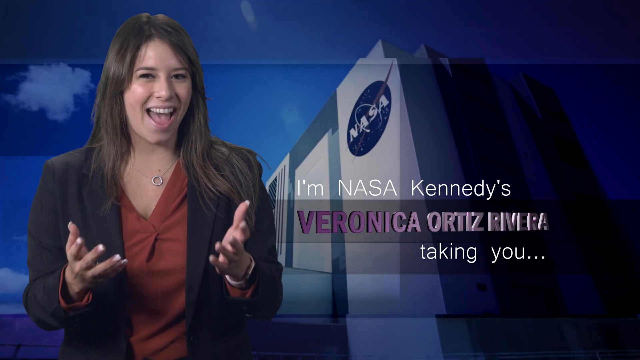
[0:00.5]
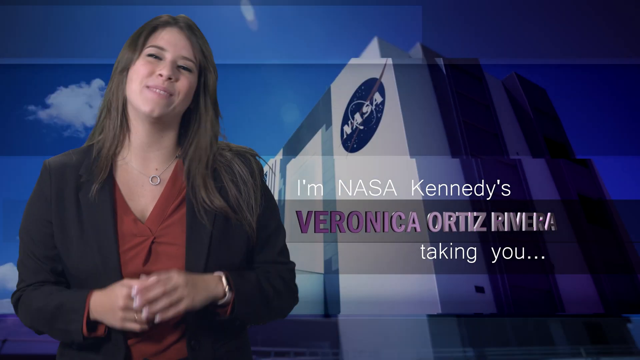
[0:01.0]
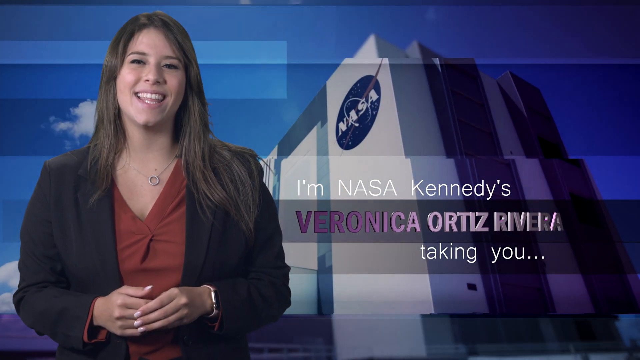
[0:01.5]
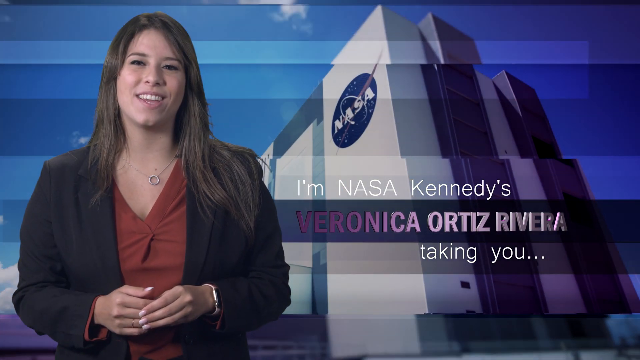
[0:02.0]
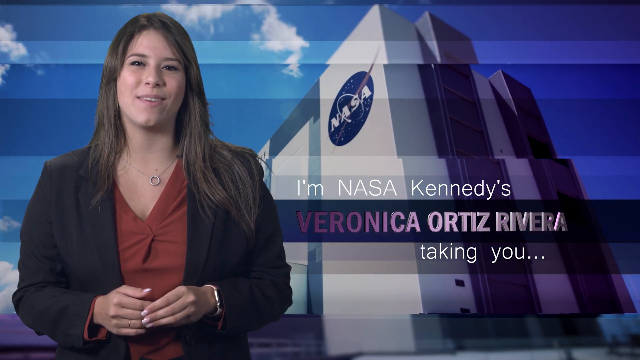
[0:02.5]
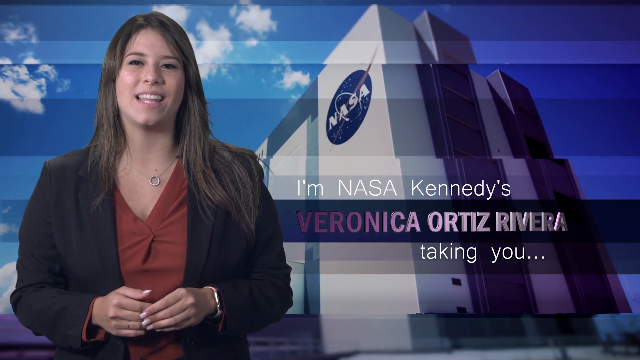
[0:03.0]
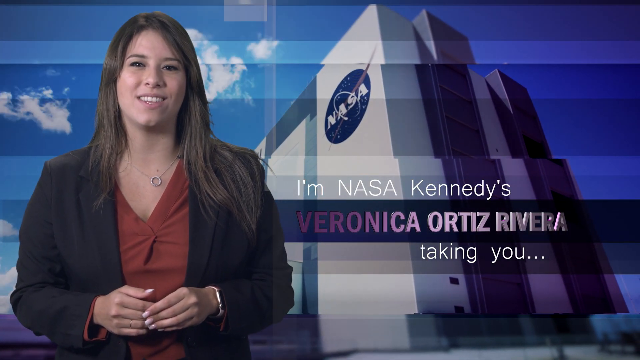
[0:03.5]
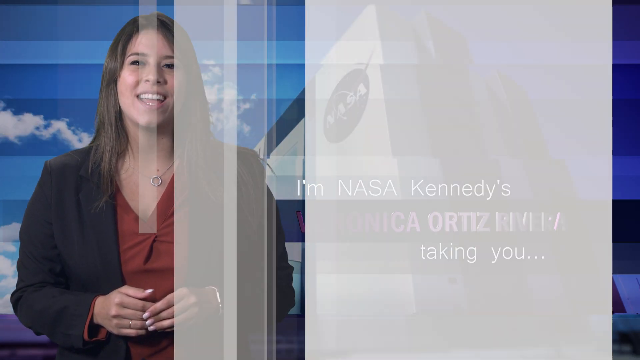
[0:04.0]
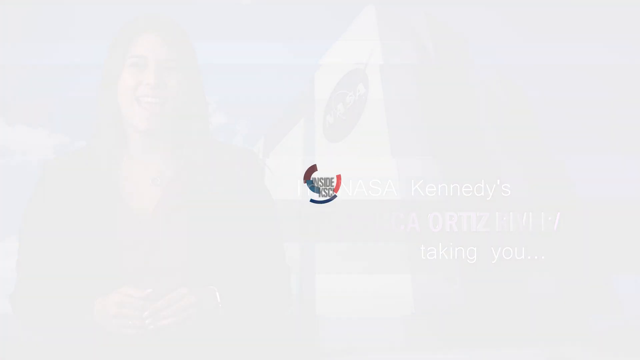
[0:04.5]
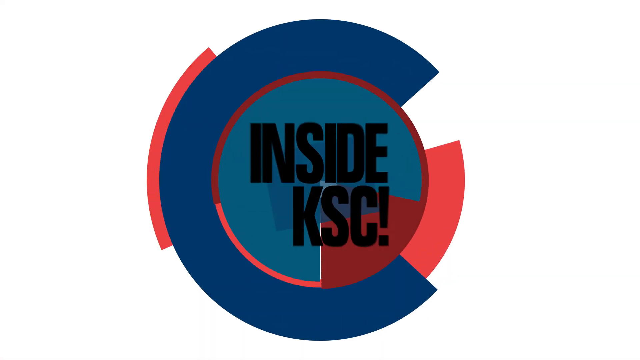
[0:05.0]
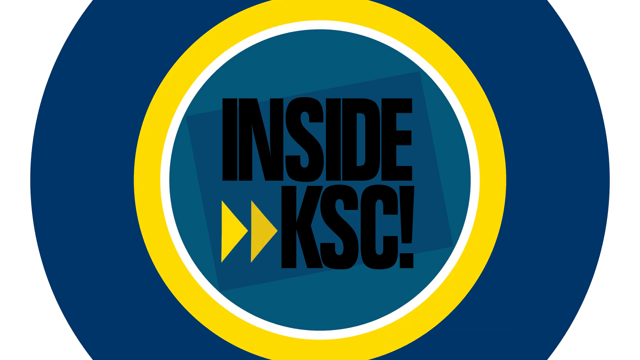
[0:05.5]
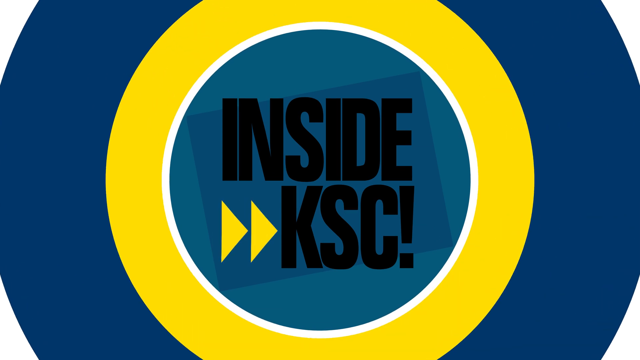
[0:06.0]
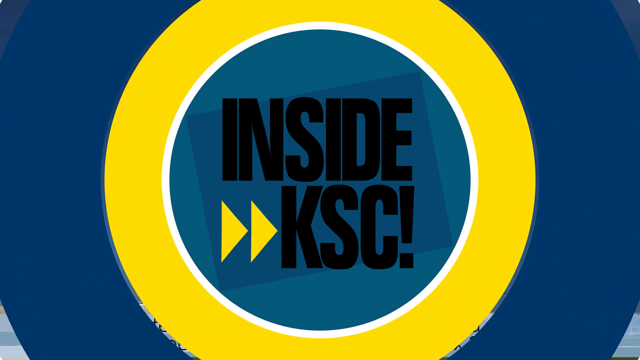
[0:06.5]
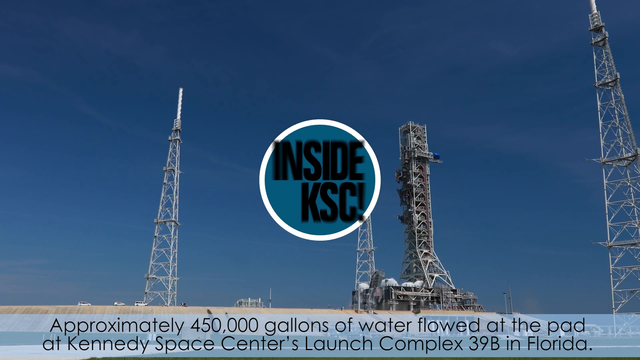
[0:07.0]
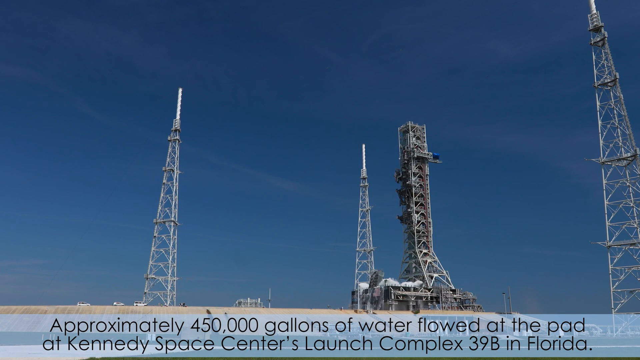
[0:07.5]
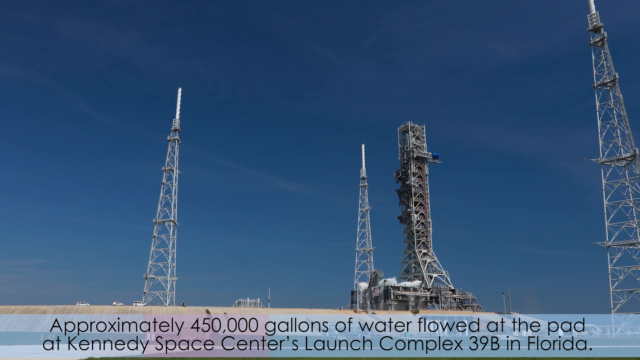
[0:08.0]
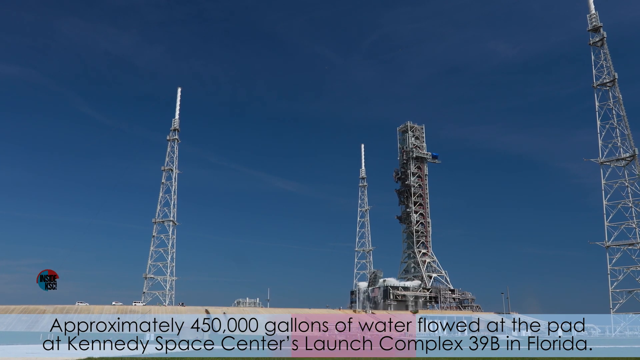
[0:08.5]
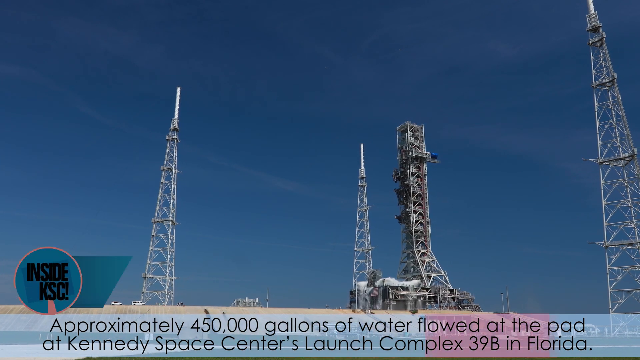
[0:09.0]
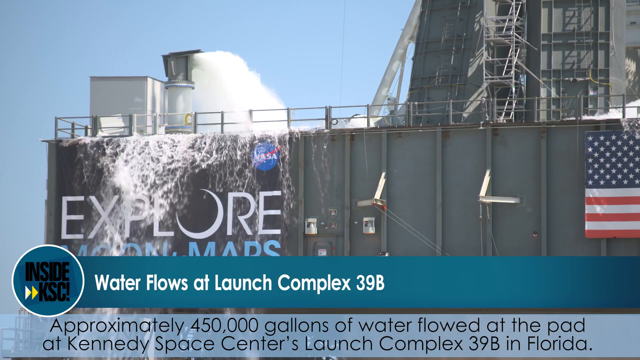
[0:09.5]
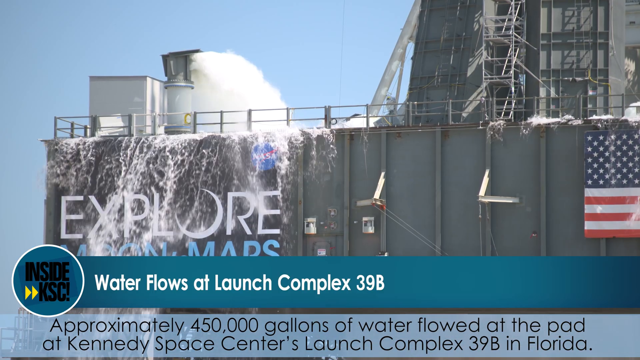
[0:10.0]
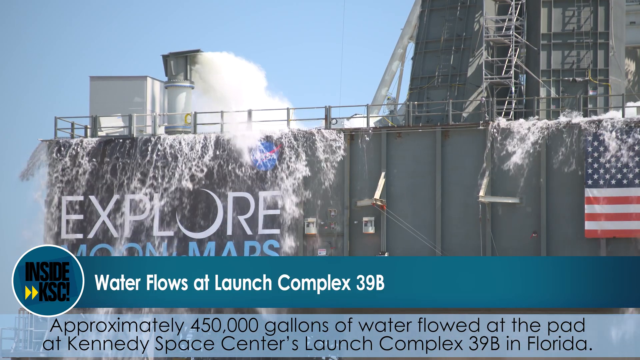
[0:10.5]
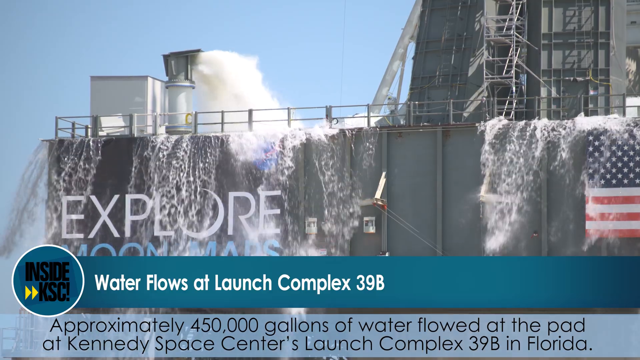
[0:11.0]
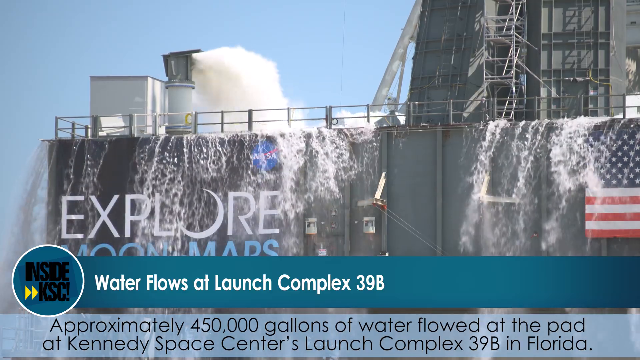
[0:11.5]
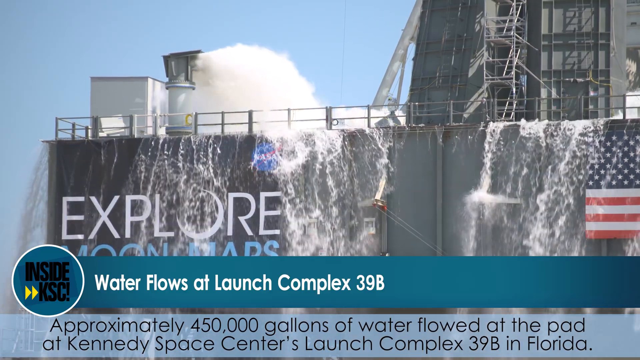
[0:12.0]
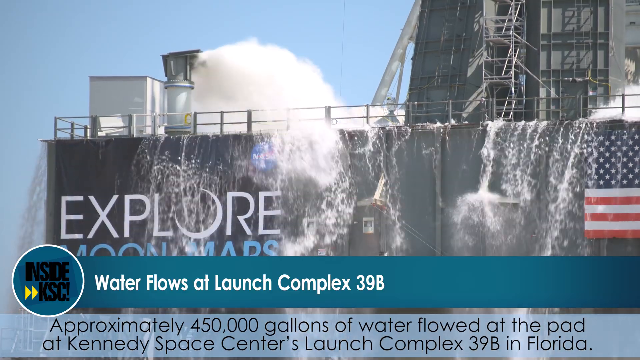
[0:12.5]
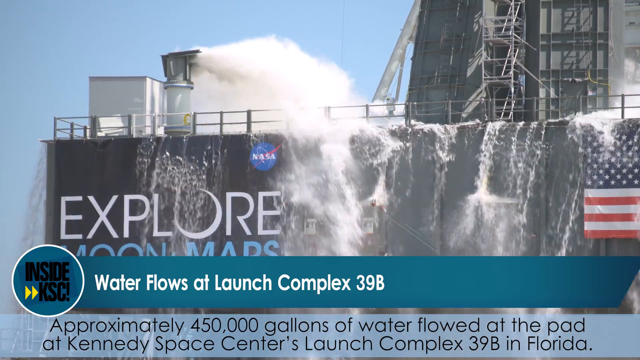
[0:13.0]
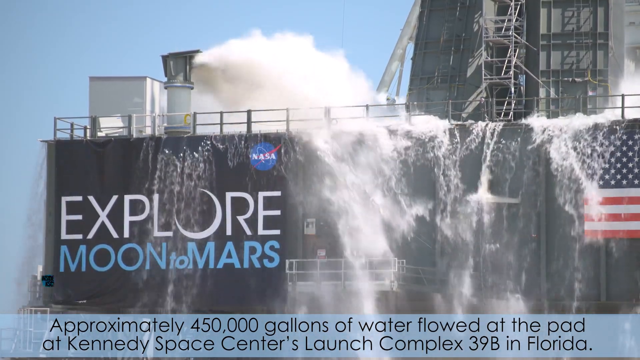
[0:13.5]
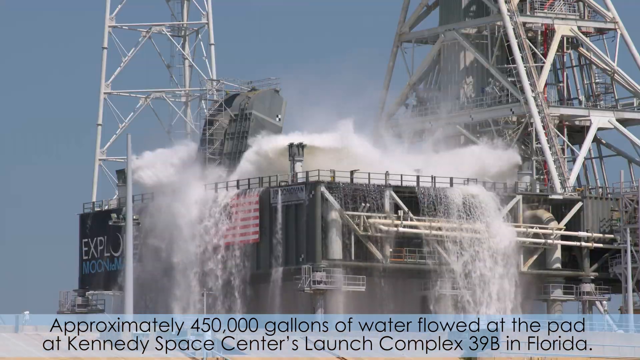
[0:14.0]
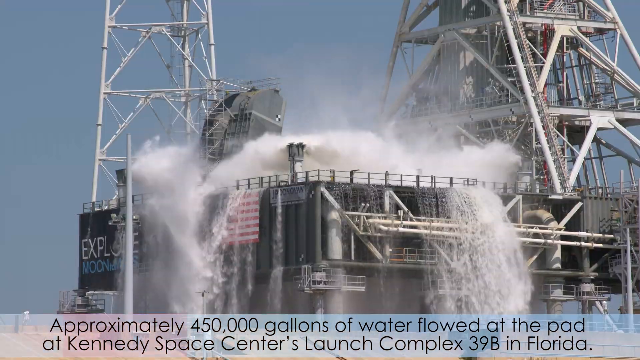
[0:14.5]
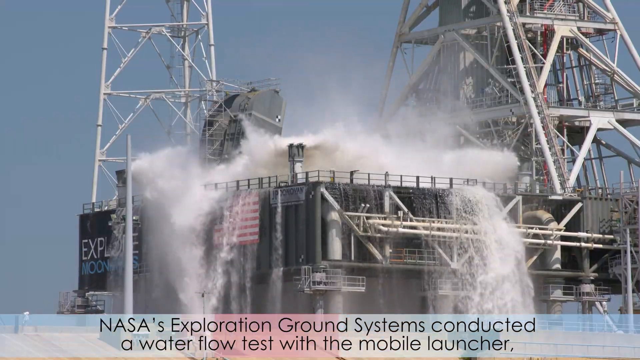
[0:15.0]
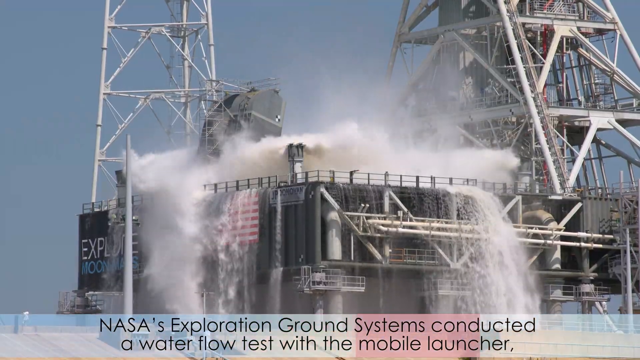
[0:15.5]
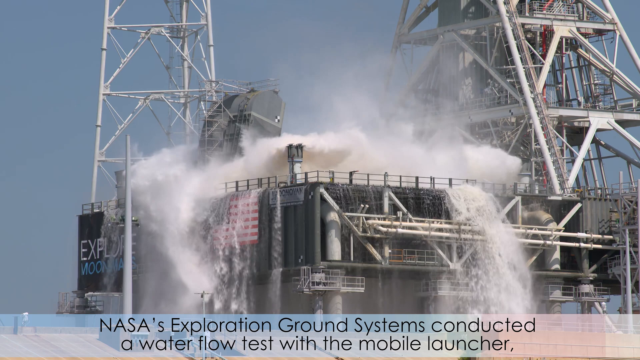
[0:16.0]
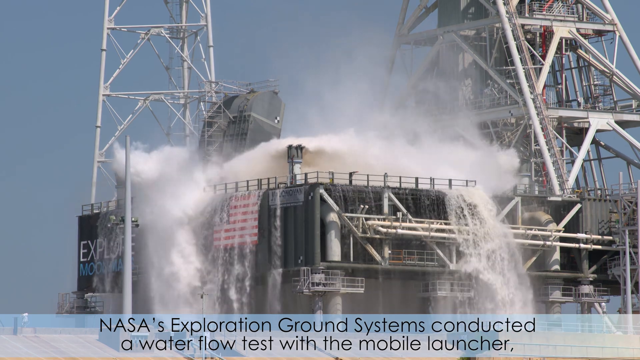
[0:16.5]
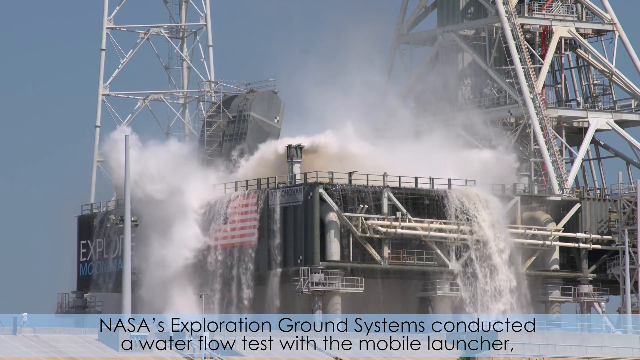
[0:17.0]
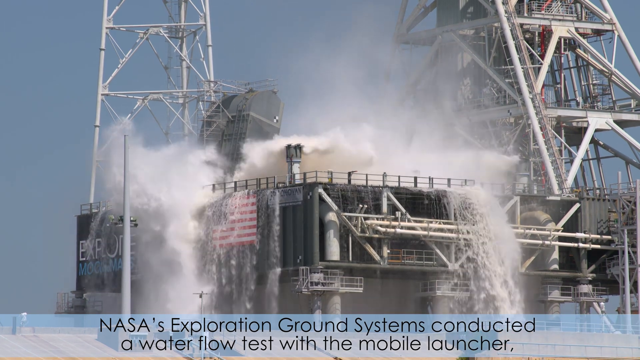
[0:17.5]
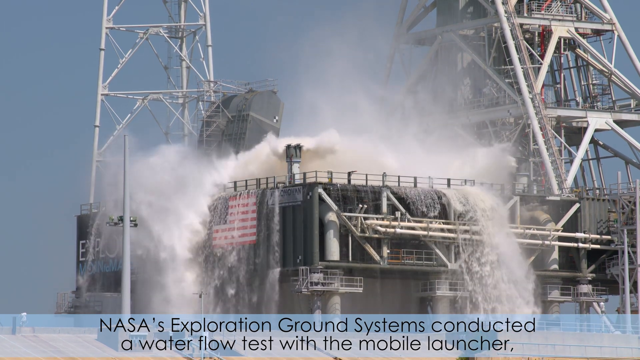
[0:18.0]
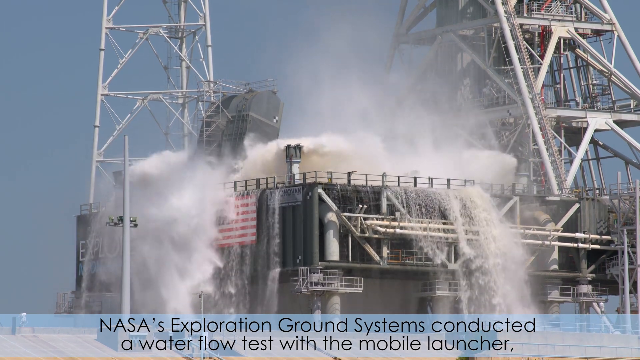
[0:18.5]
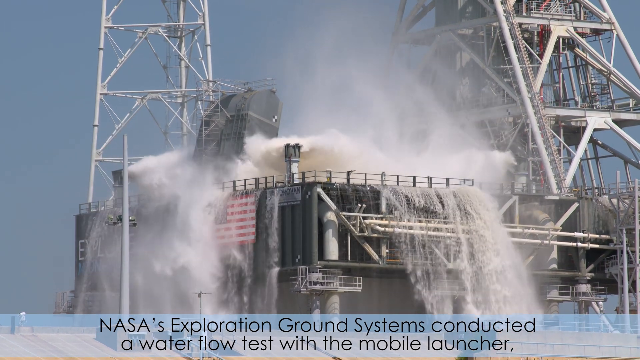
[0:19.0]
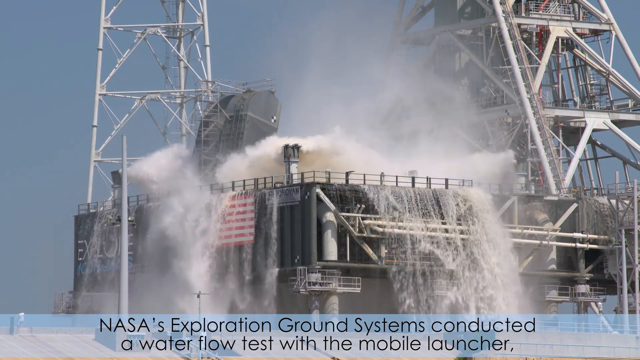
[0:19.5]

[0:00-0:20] A woman appears on the left side of the screen, visible from the mid-torso upward, with a text label reading "I'm NASA Kennedy's Veronica Ortiz Rivera, taking you". She is talking, and the tall white NASA building is in the background. The video transitions to a white screen where a large logo with text inside appears, reading "Inside KSC". It then cuts to a space launch pad, presumably for rockets, labeled "approximately 450,000 gallons of water flowed at the pad at Kennedy Space Center's Launch Complex 39B in Florida". Next comes the base of the pad, where a large metal spout on one of the corners blasts white water onto the pad. A new blue banner with white text appears, reading "Water flows at Launch Complex 39B". The camera cuts to a wider view showing multiple spouts on the different corners of the launch pad, all blasting water onto the pad, with the spraying water appearing white.